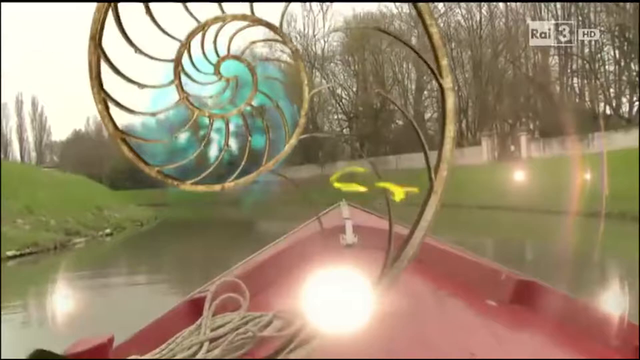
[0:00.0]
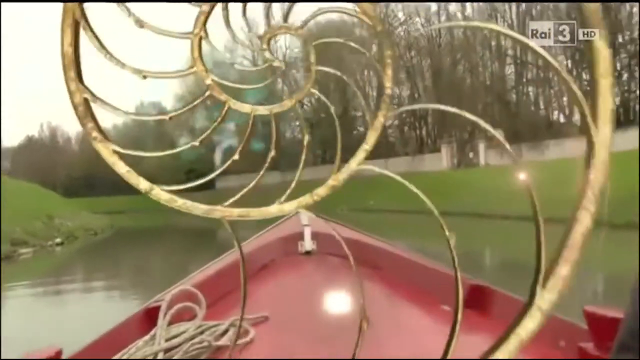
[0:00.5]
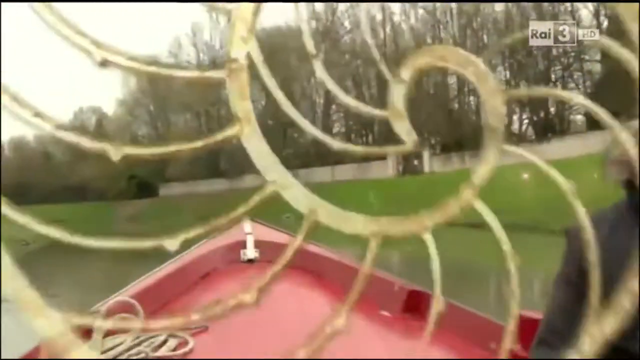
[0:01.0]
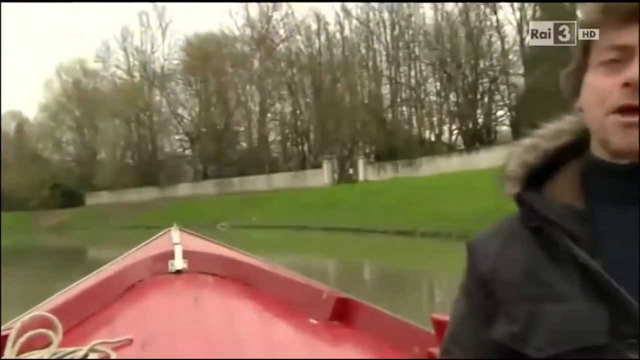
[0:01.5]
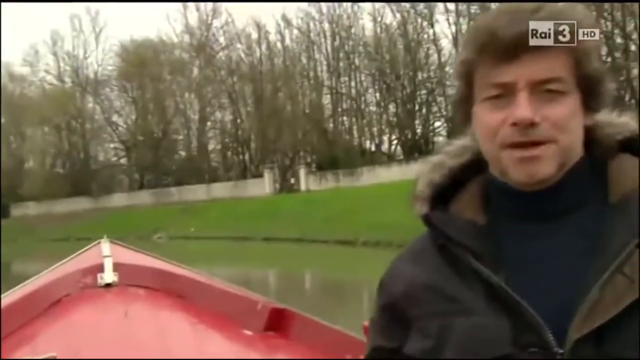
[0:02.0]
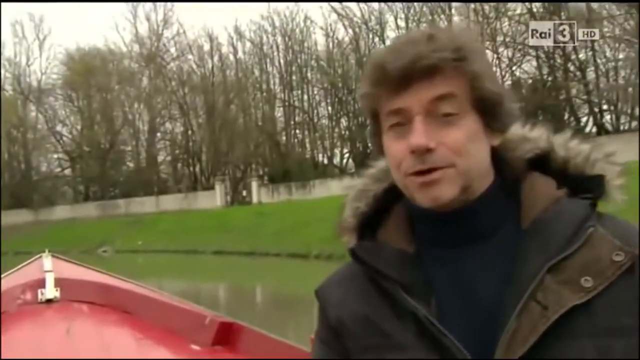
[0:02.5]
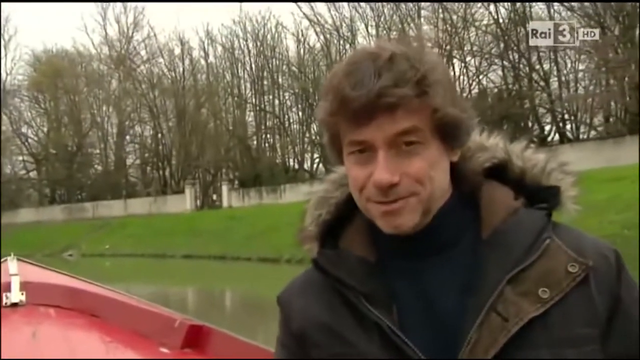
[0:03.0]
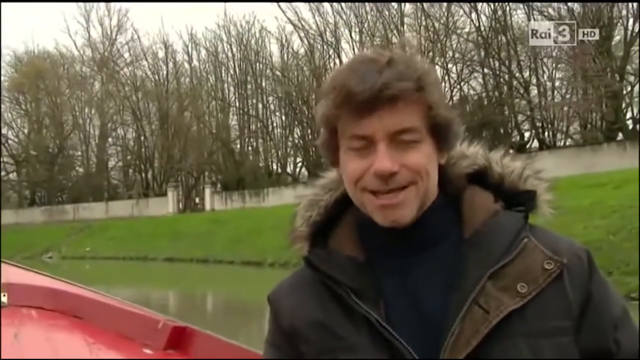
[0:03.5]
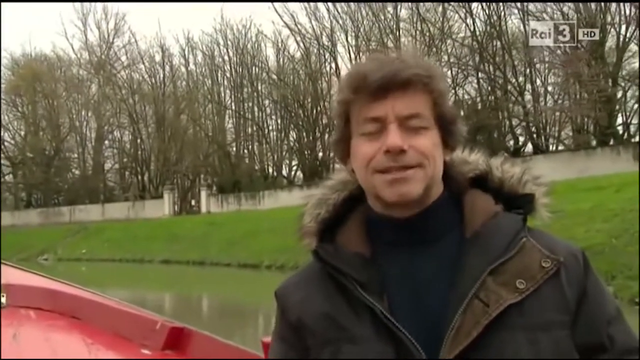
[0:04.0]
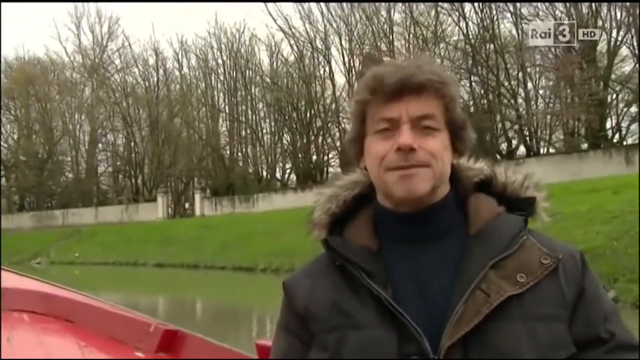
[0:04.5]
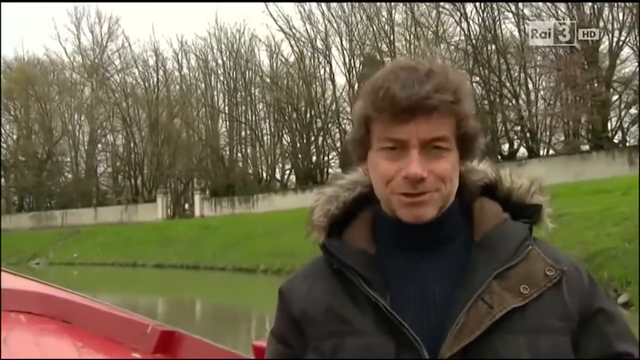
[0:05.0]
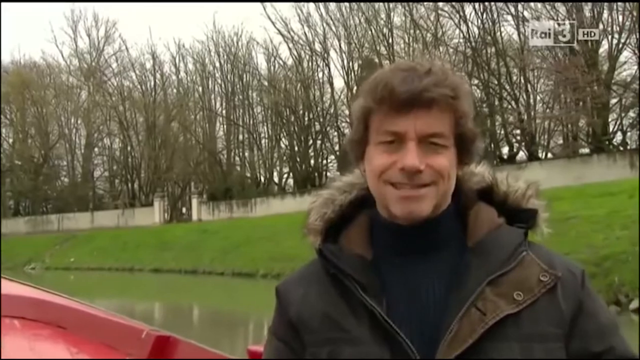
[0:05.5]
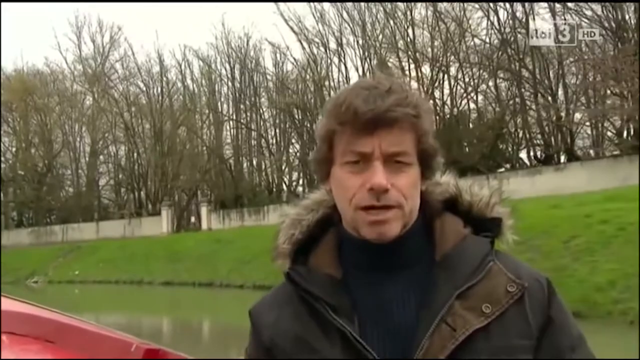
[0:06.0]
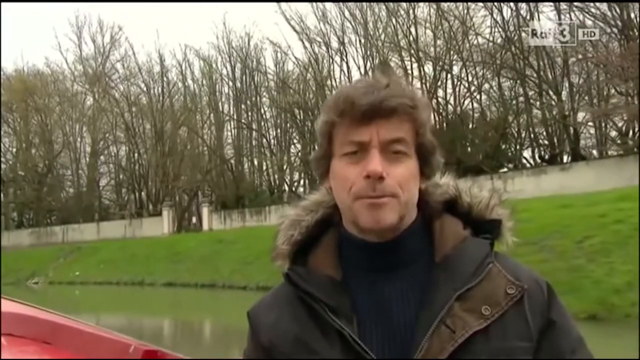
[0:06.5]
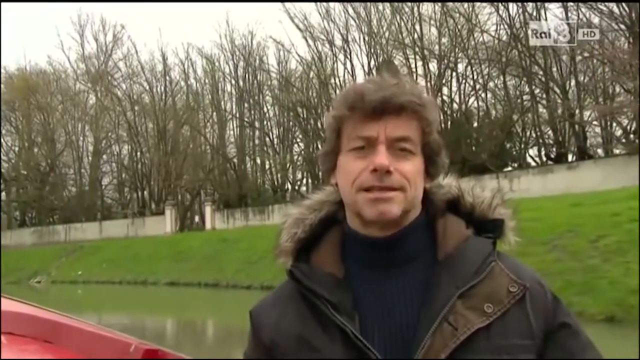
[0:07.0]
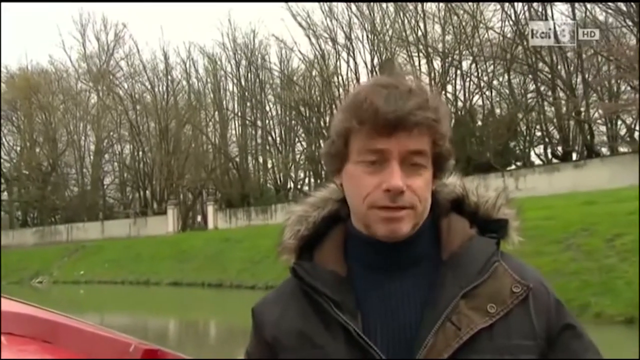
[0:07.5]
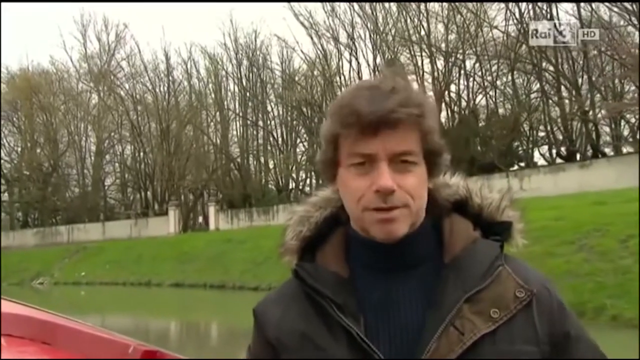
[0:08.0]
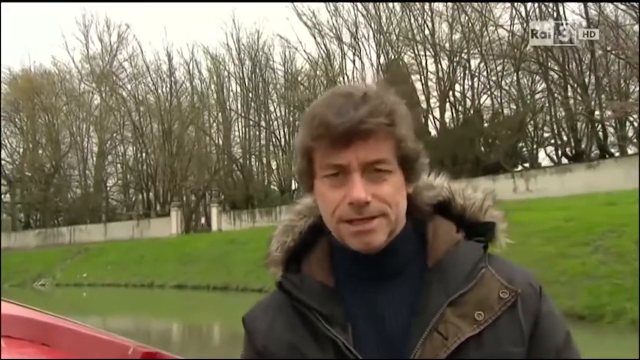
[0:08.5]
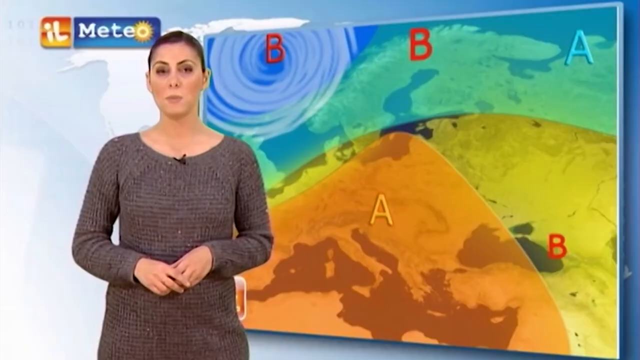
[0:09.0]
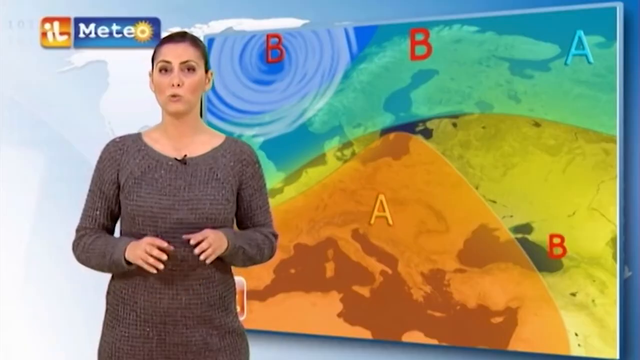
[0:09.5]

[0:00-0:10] The video is recorded outdoors in what appears to be cold weather, since the trees have no leaves. A Caucasian man with a thick head of hair, wearing a black turtleneck and a brown jacket with fur around the neck, smiles as he talks into a camera. He kind of bobs his head up and down, and his eyebrows make a couple of inflections. The video then switches to a woman in front of a colorful background who looks like she may be some kind of weather person. She wears a sweater with a small black microphone clipped at the top, her hair is pulled back, and she lifts her hands up and down as she speaks into the camera.